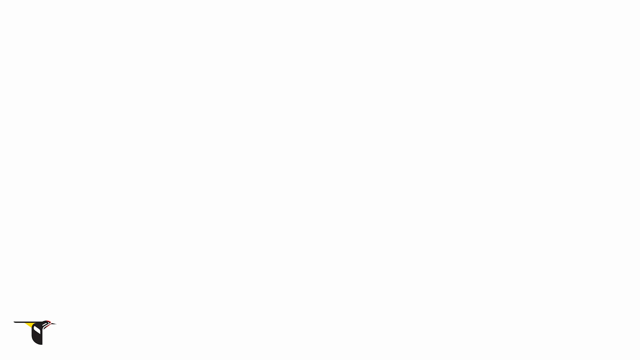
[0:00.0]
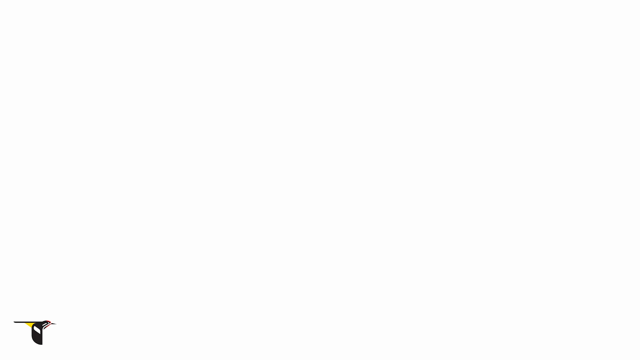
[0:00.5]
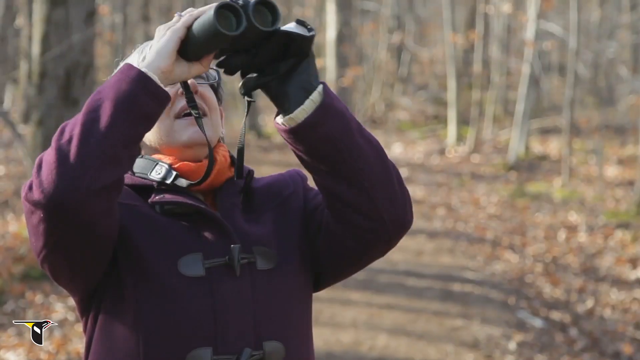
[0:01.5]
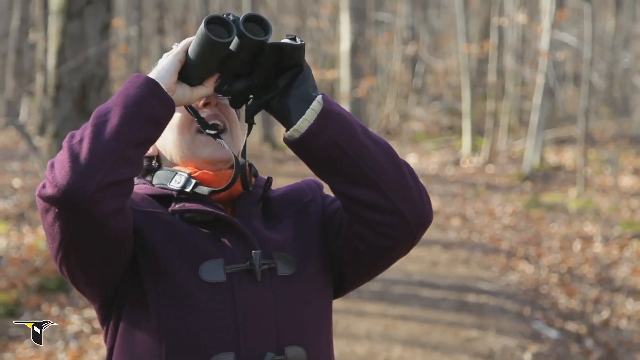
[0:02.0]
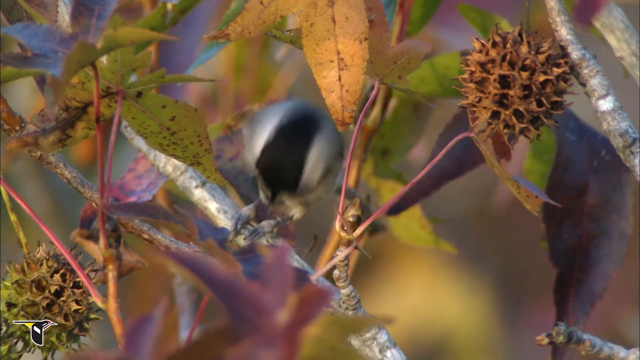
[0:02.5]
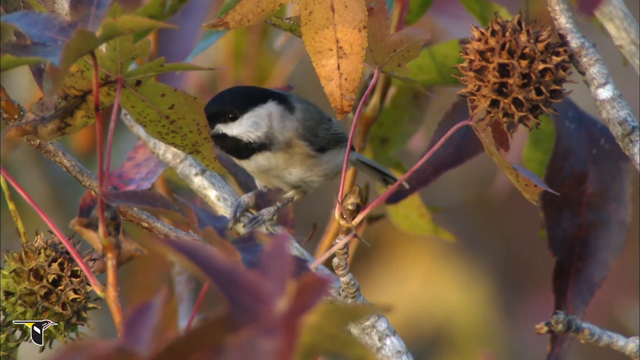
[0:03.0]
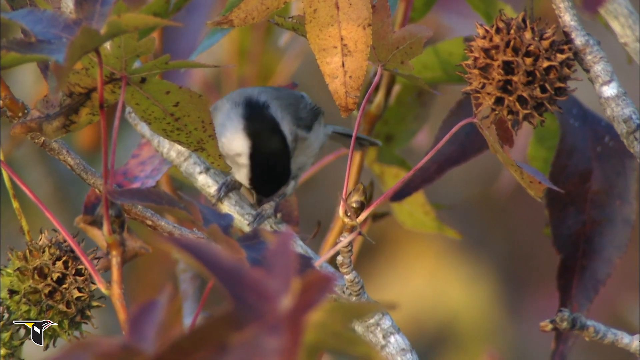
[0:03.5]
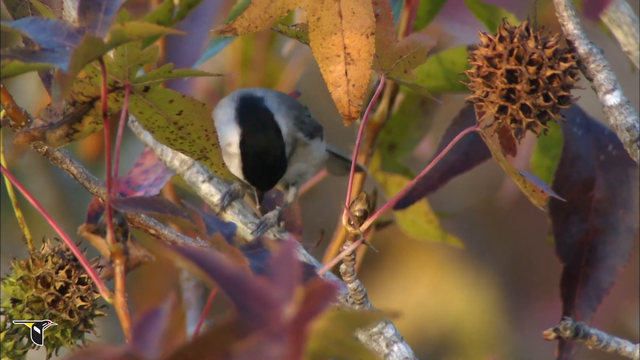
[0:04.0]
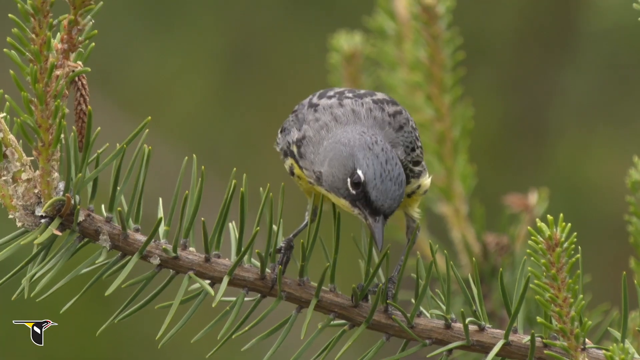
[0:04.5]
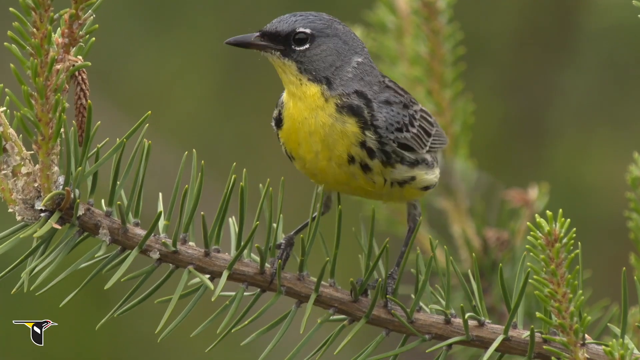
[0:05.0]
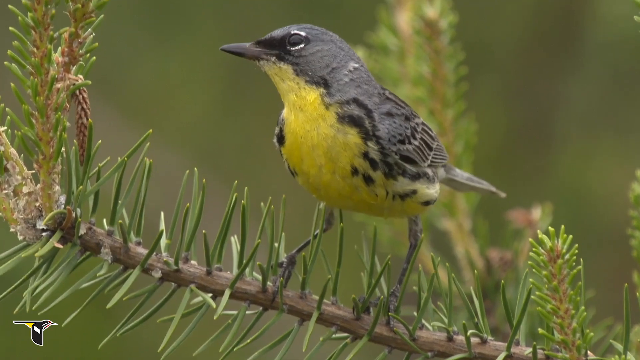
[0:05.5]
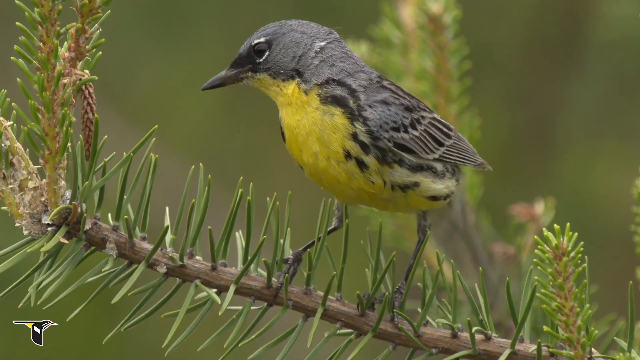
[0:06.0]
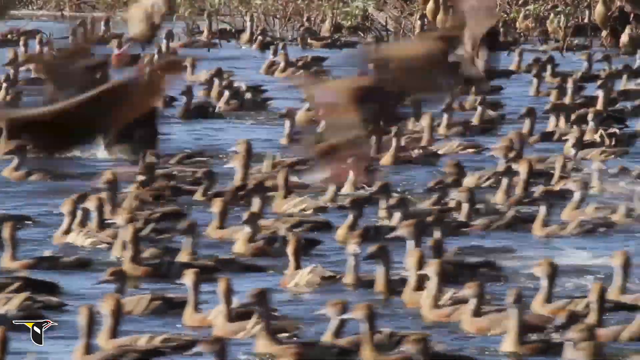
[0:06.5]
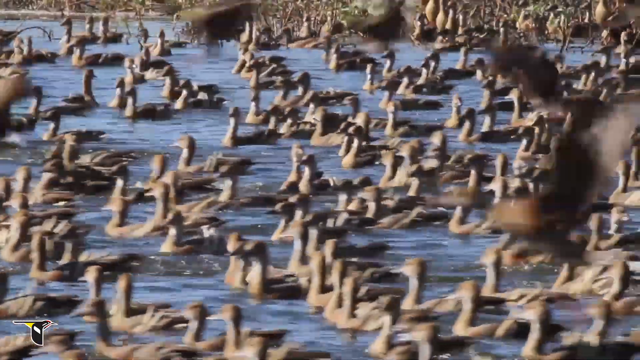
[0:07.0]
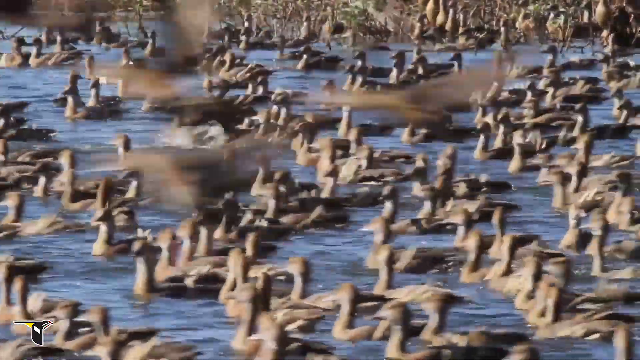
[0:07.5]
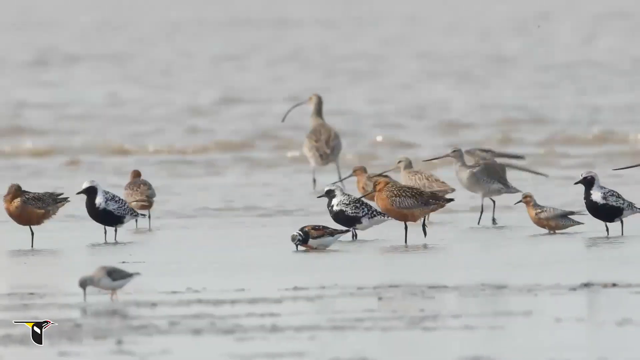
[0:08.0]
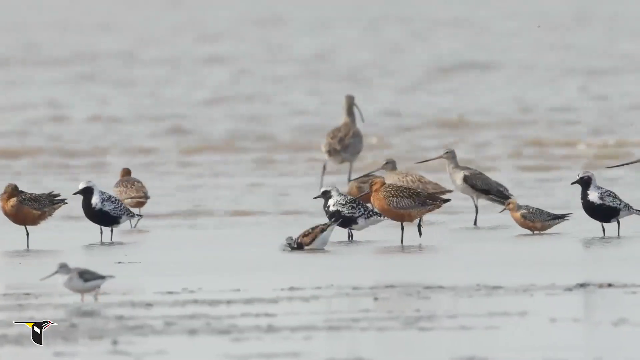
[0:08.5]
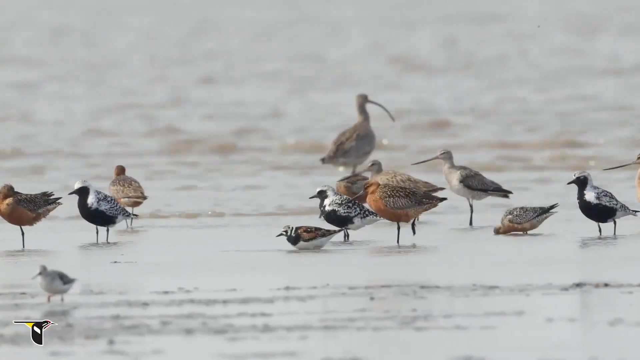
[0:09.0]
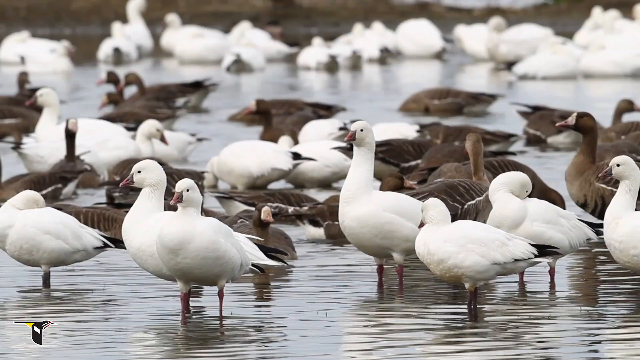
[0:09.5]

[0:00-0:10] The video appears to be related to birds and bird watching. A woman in a purple jacket with binoculars, apparently on a wooden path, looks up into the sky. The scene cuts to a chickadee on a branch surrounded by somewhat colorful leaves and seeds; the chickadee is grooming its feet. Another cut shows a different bird, gray with black markings and a yellow breast, on a pine bough. Next comes a wetland scene with many birds, apparently ducks of some sort, swimming in the water of a swamp, followed by a shoreline where birds that appear to be ocean birds are along the sand of a beach leading into a body of water.